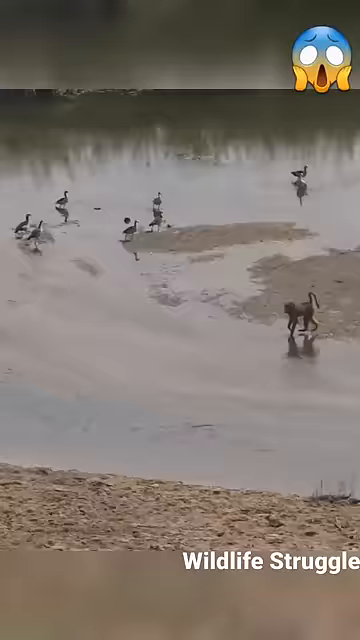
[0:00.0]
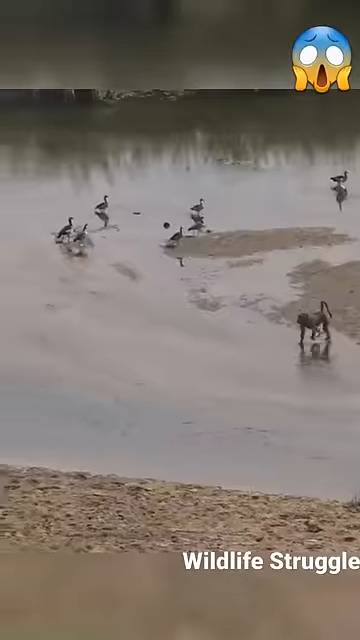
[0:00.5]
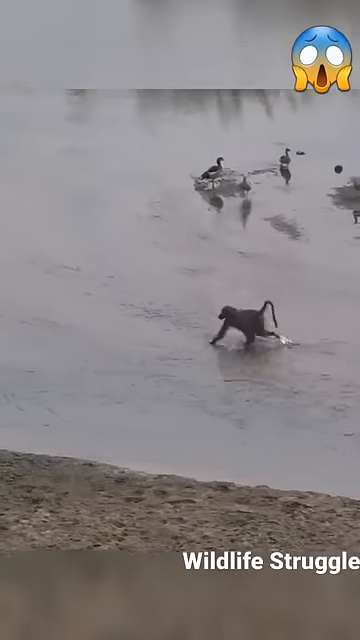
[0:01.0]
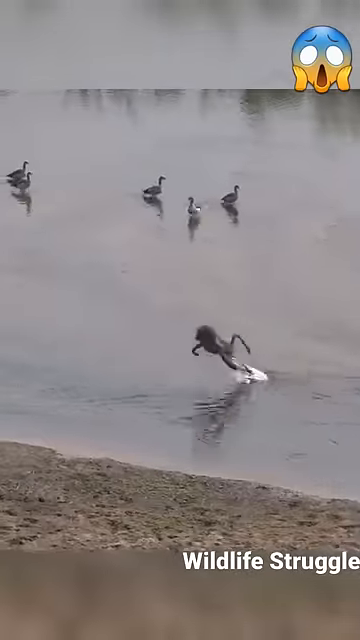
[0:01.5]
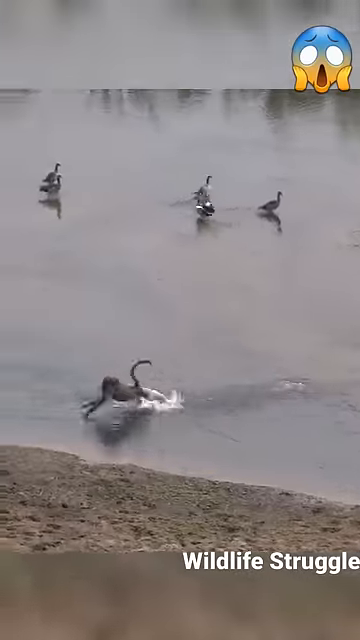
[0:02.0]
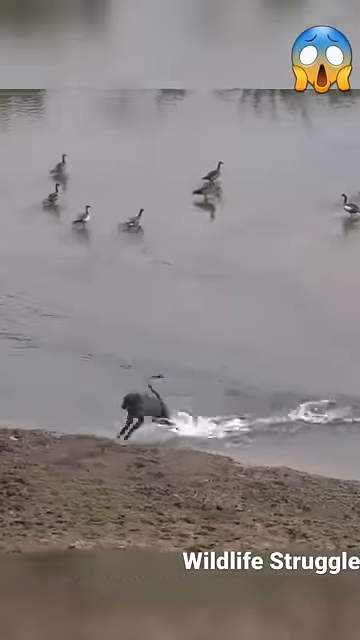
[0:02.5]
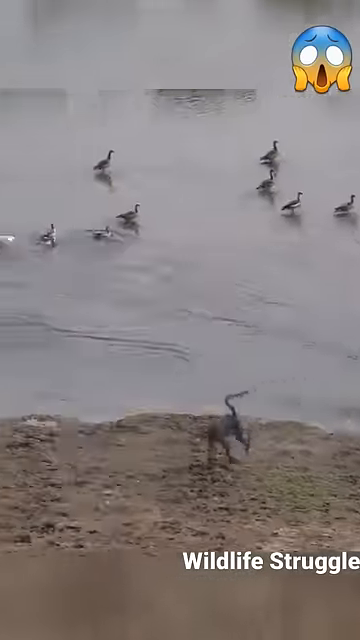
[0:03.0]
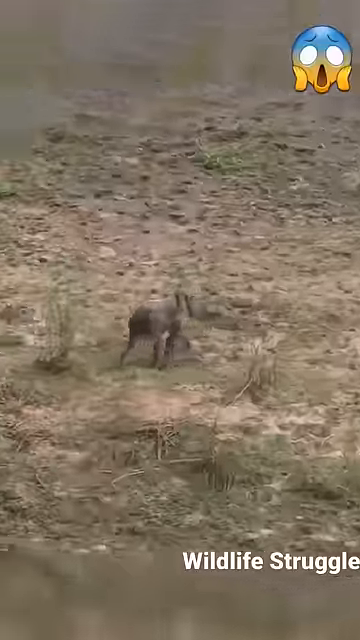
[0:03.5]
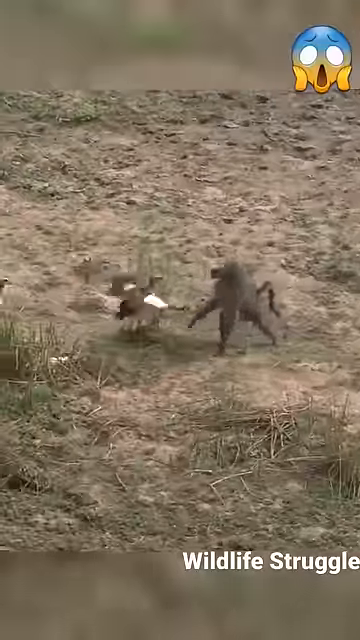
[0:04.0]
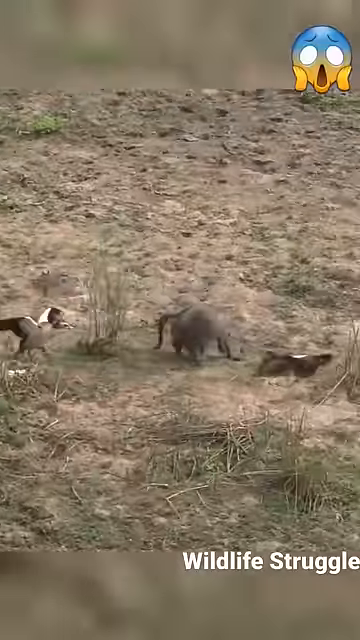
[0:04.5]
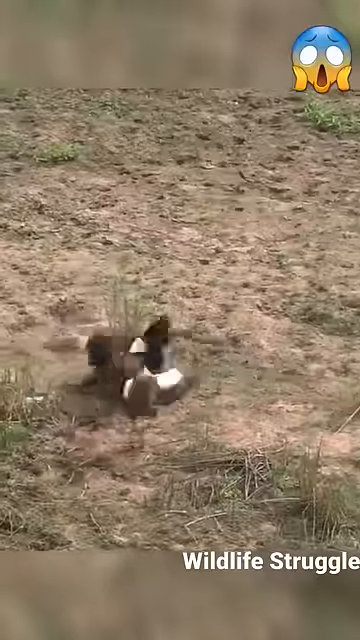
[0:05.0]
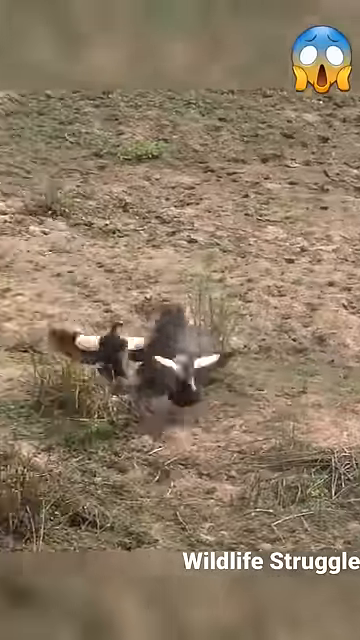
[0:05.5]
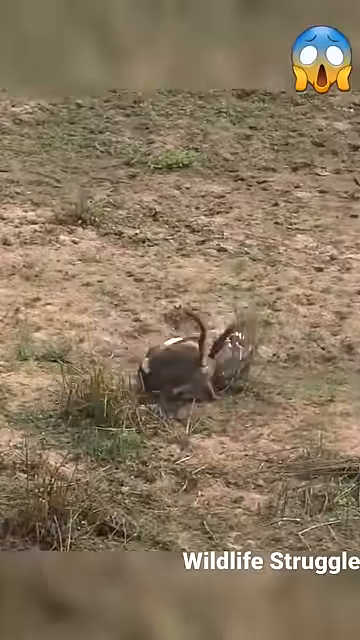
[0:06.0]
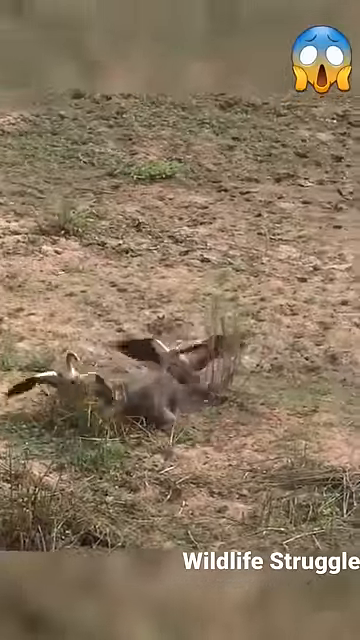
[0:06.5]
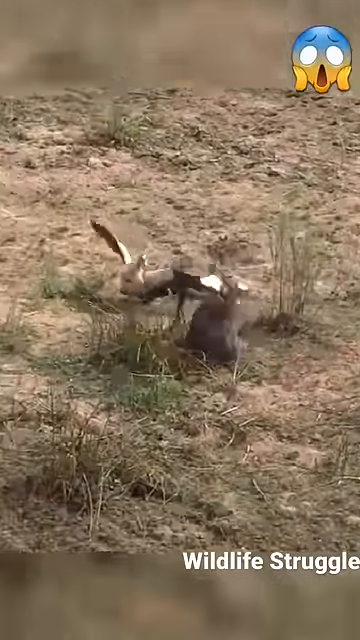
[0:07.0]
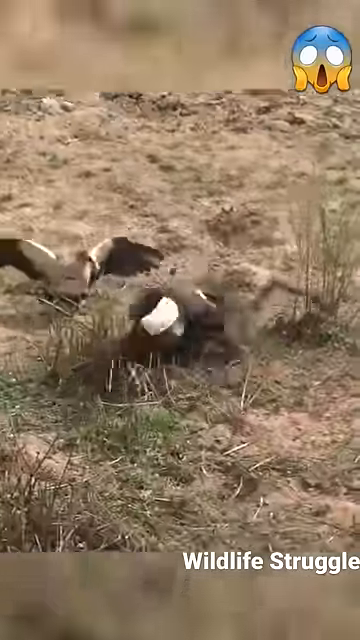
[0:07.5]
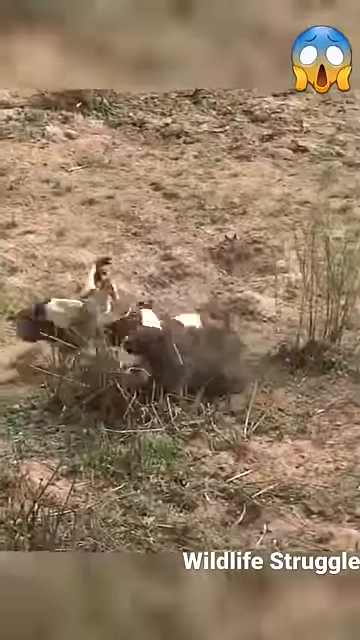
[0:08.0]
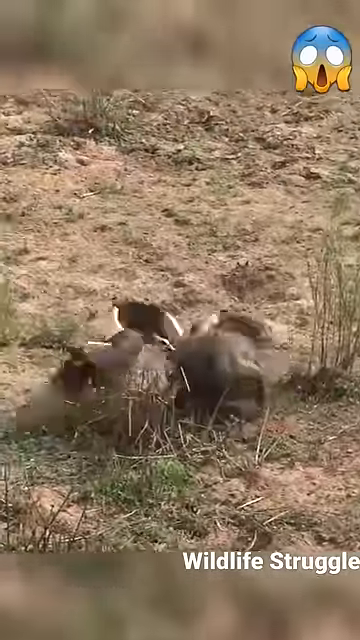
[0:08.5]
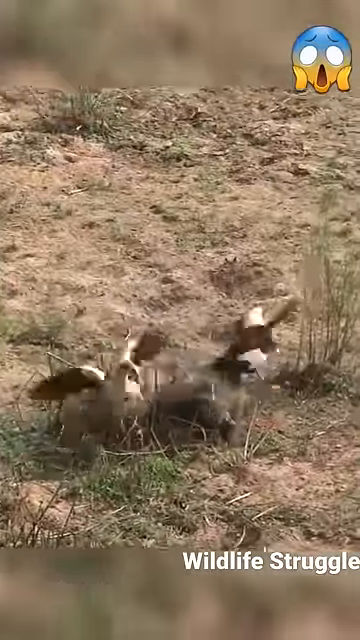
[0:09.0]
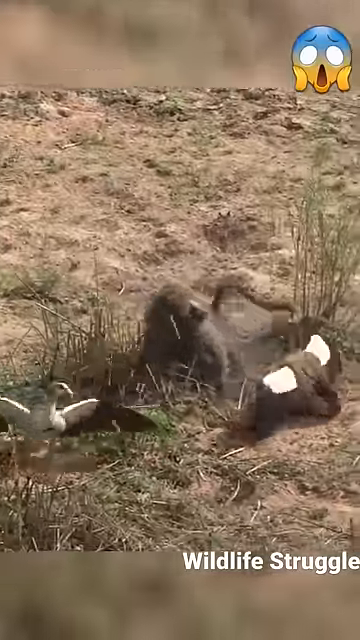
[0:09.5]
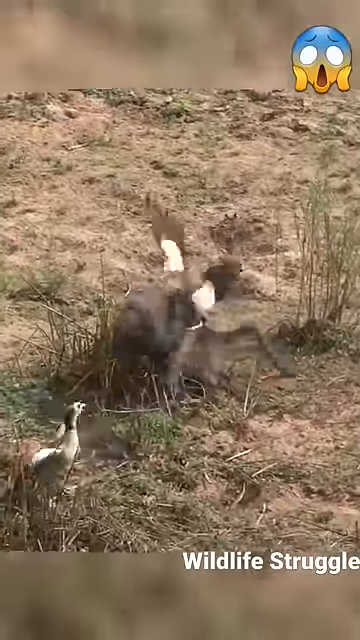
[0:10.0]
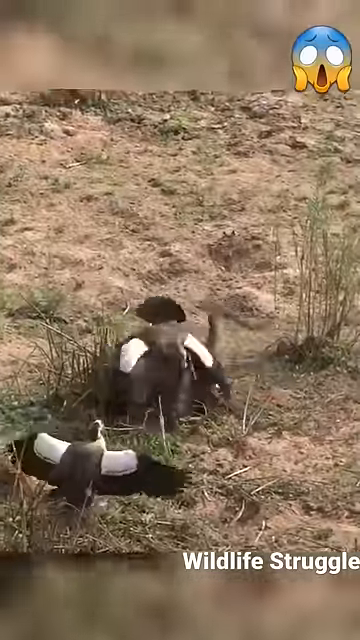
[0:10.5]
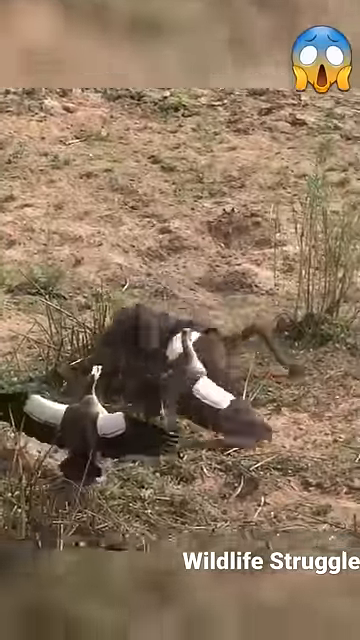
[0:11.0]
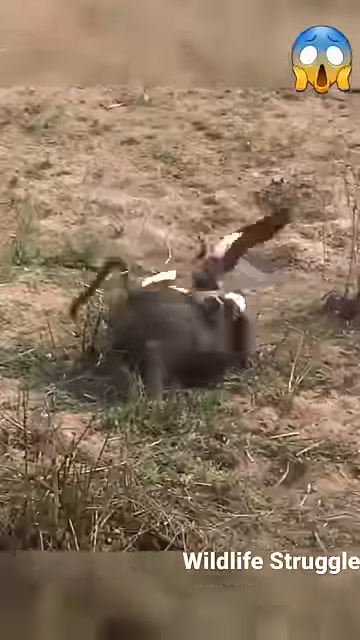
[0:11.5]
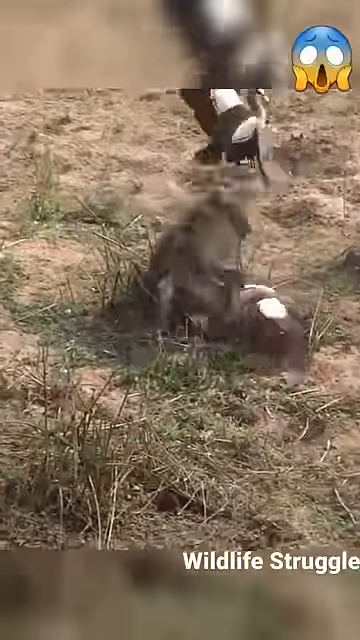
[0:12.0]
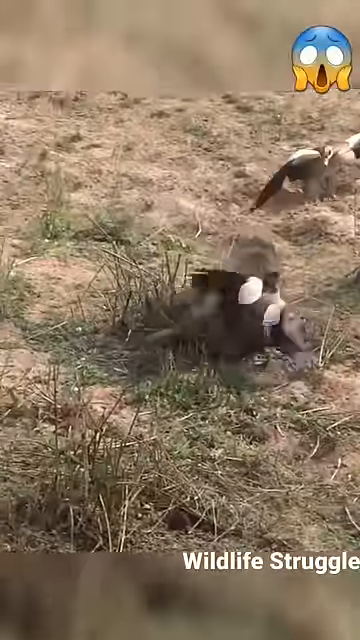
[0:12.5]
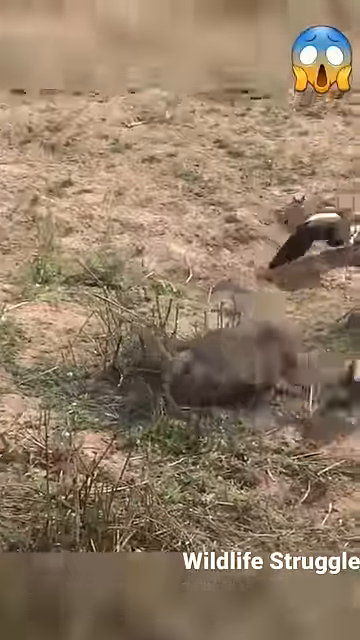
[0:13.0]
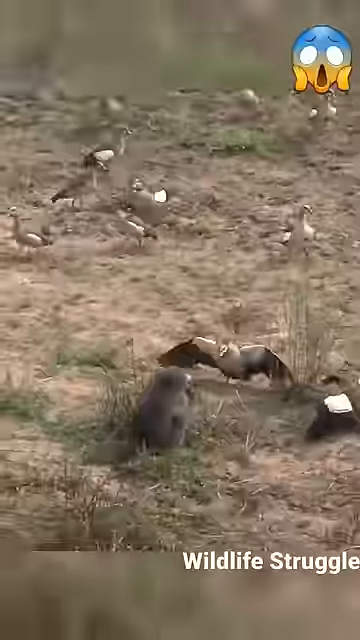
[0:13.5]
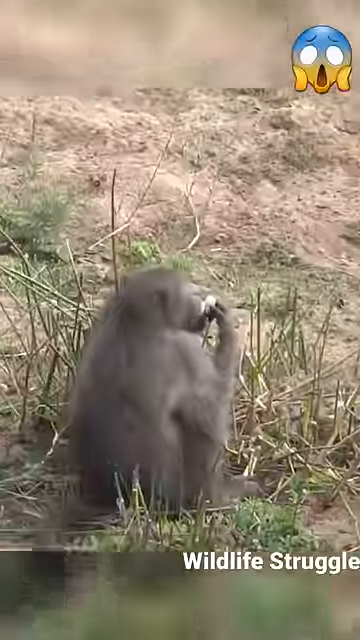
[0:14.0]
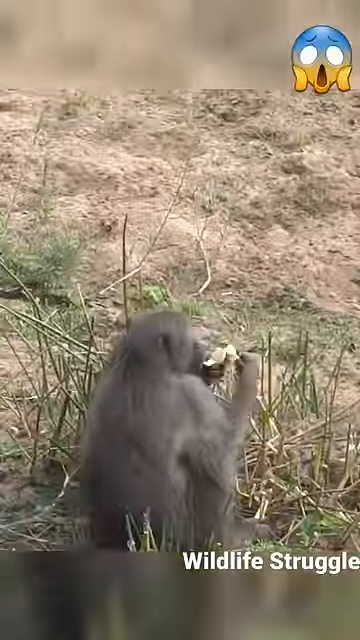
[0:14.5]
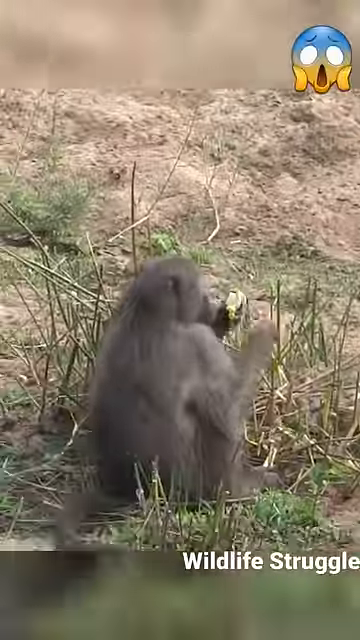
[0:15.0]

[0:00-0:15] What looks to be a pond or some type of water area appears, with a flock of birds and, in the water, what looks like a baboon. The baboon is being attacked by the birds, which look like some type of geese. There is sandy gray dirt and mud. The baboon is chased out of the water up onto the land, where it is beaten up, attacked, bitten and jumped on by what looks to be a flock of geese. There are apparently around 20 geese, but only two are really seen attacking the baboon by its head and pecking at it.